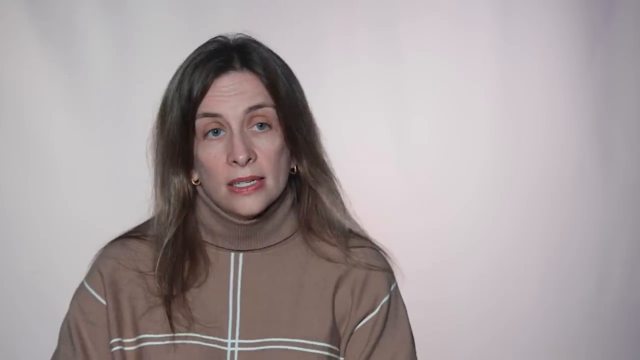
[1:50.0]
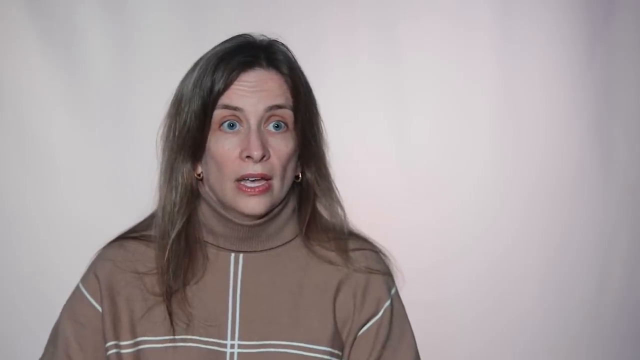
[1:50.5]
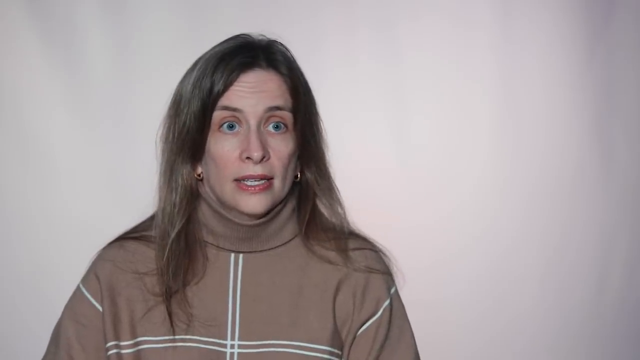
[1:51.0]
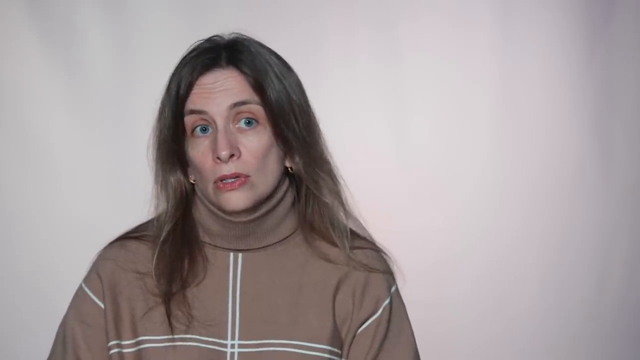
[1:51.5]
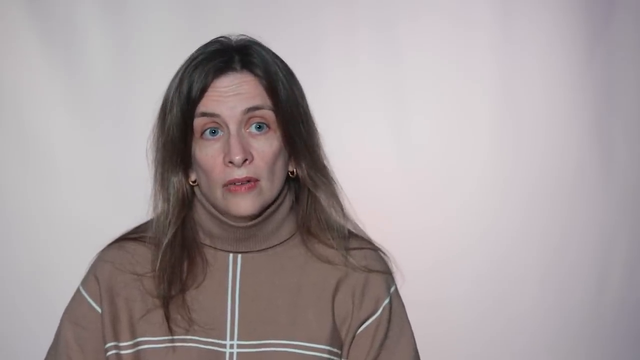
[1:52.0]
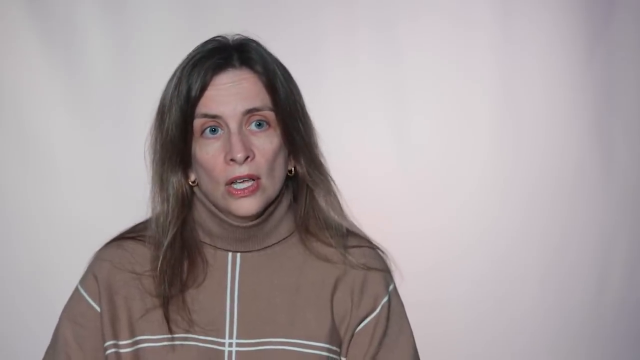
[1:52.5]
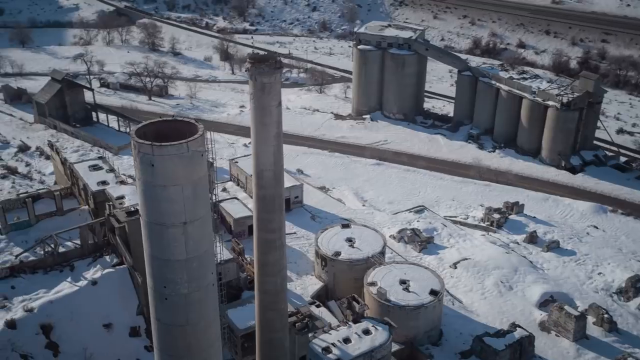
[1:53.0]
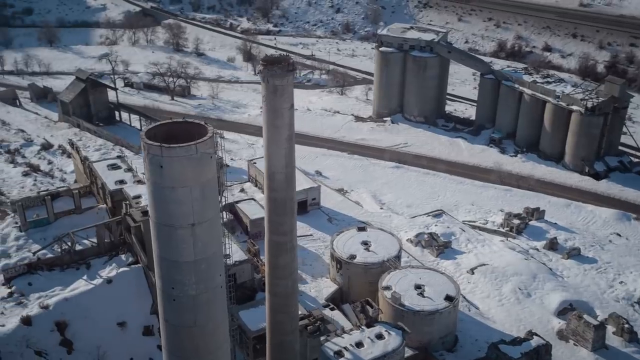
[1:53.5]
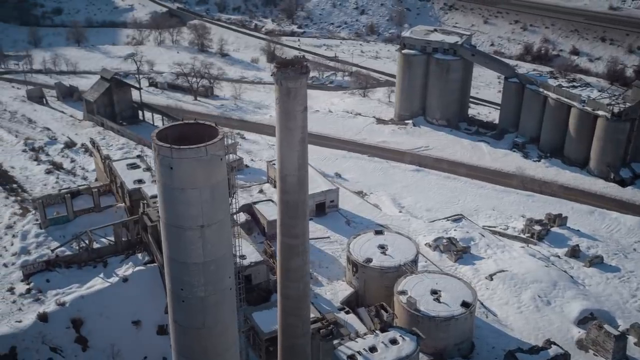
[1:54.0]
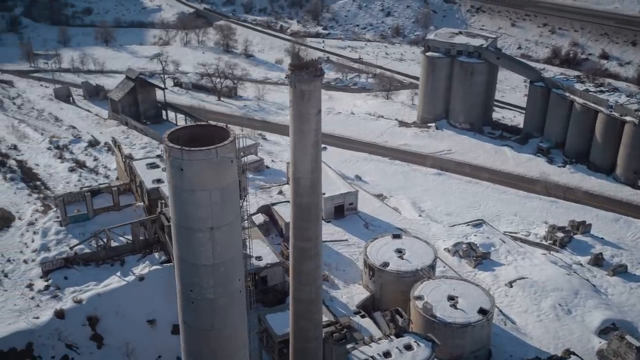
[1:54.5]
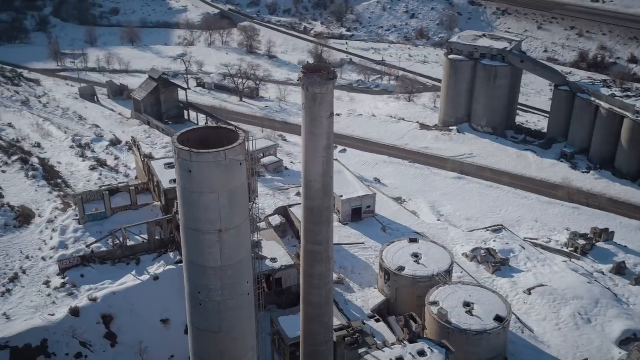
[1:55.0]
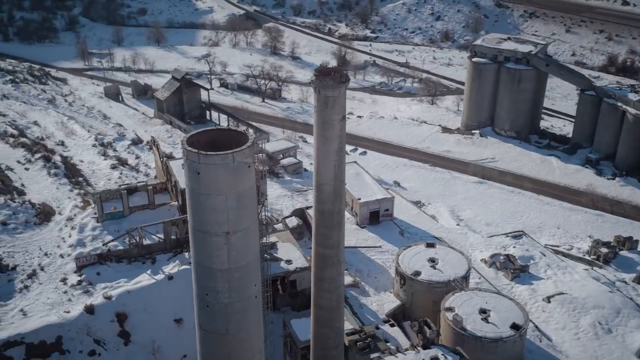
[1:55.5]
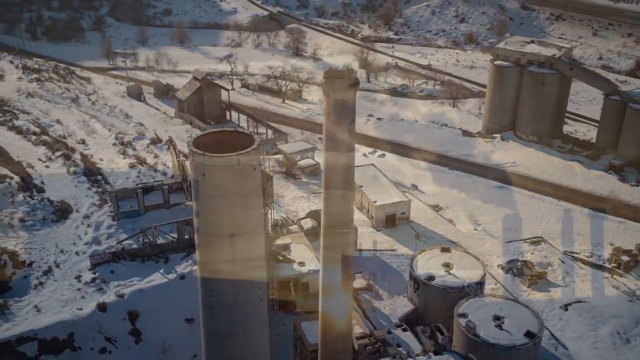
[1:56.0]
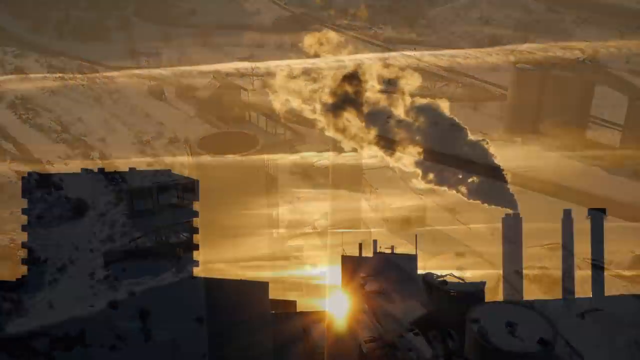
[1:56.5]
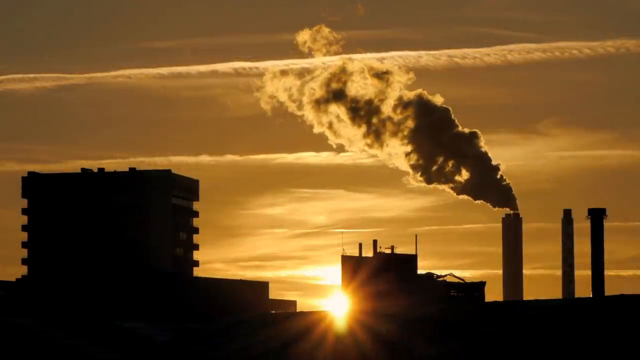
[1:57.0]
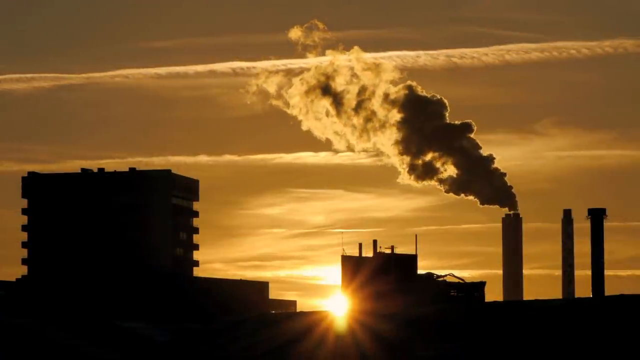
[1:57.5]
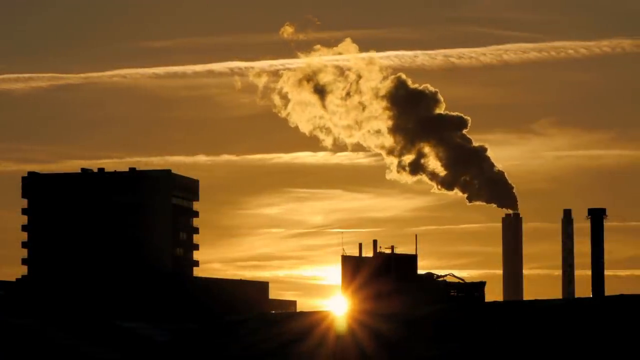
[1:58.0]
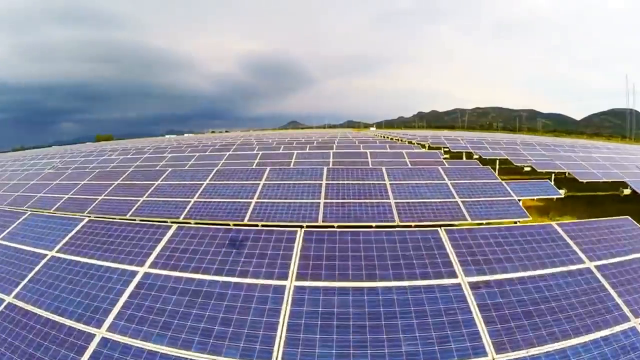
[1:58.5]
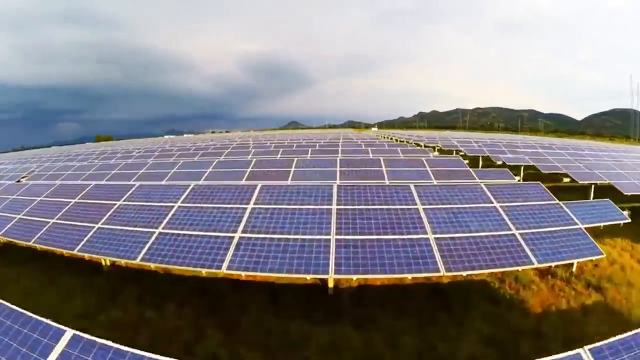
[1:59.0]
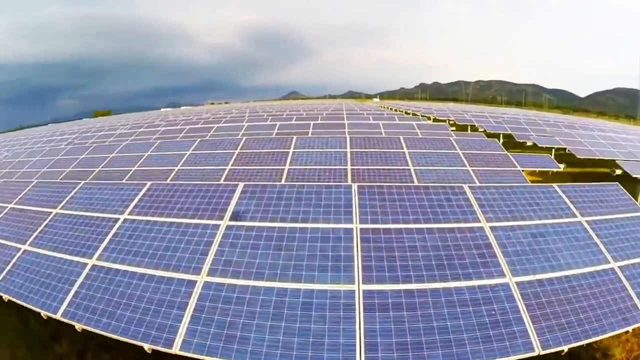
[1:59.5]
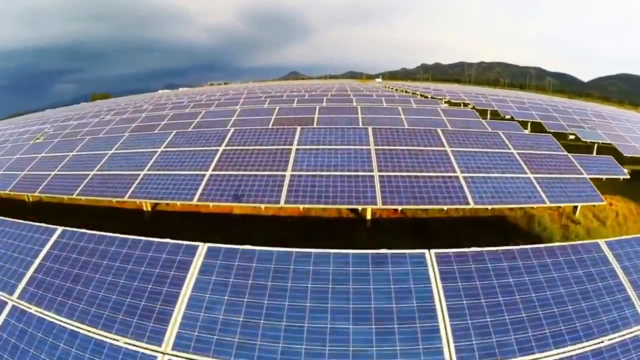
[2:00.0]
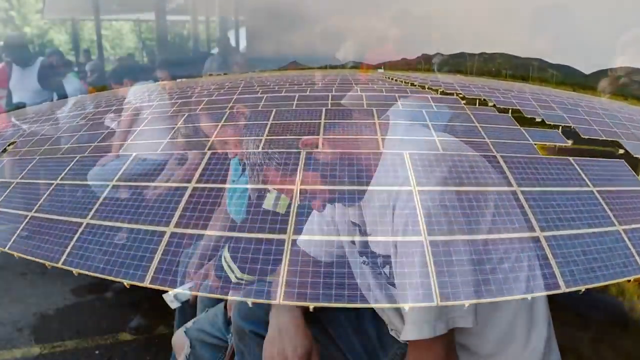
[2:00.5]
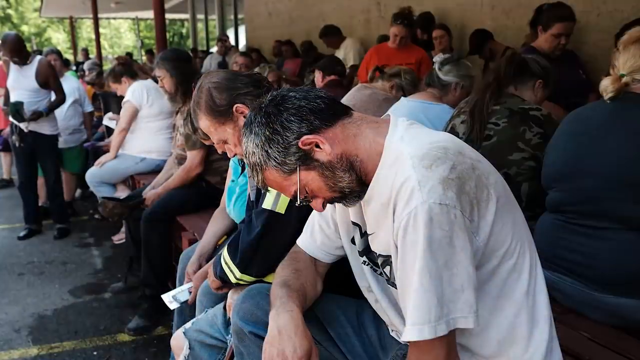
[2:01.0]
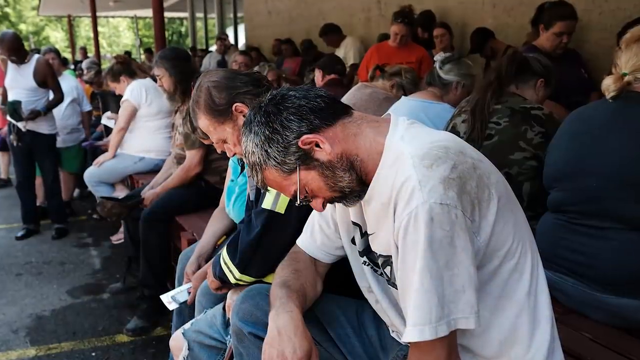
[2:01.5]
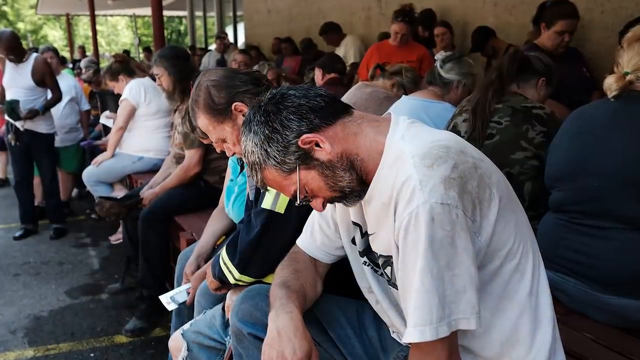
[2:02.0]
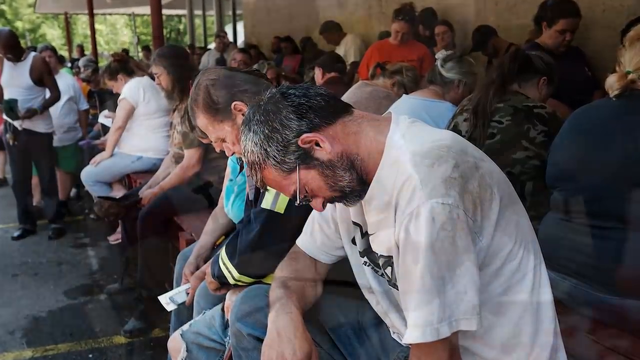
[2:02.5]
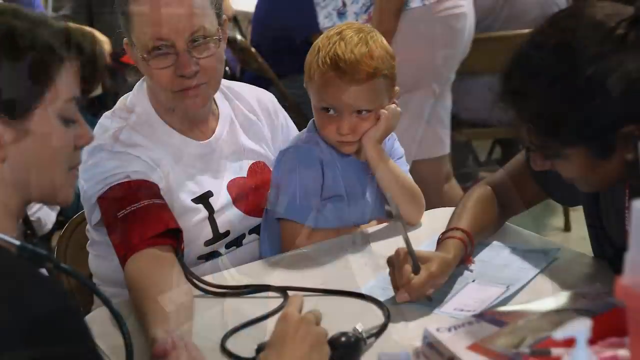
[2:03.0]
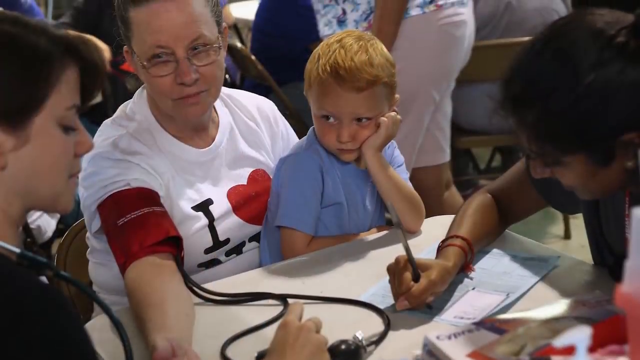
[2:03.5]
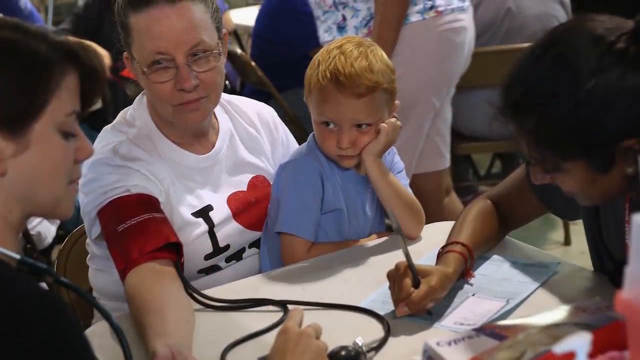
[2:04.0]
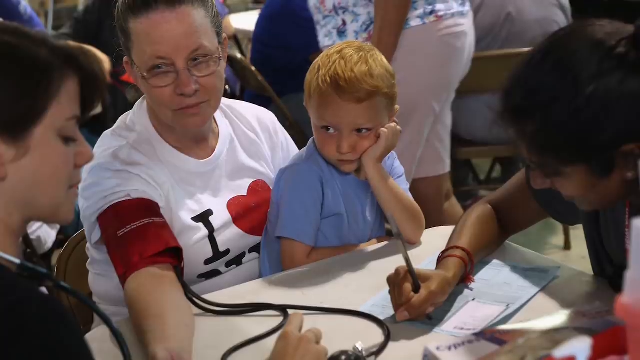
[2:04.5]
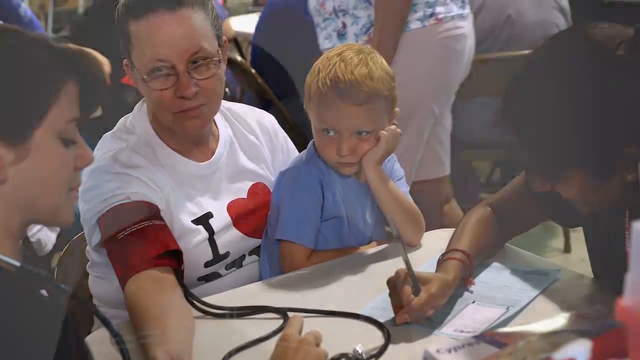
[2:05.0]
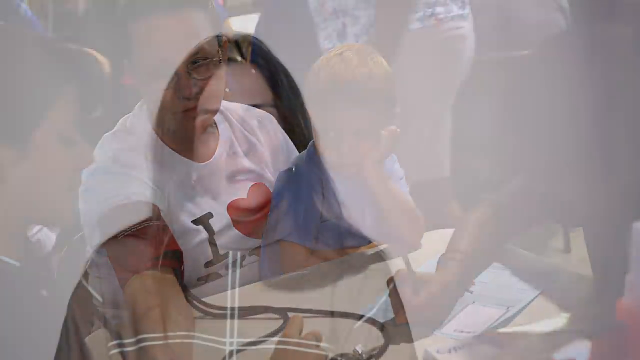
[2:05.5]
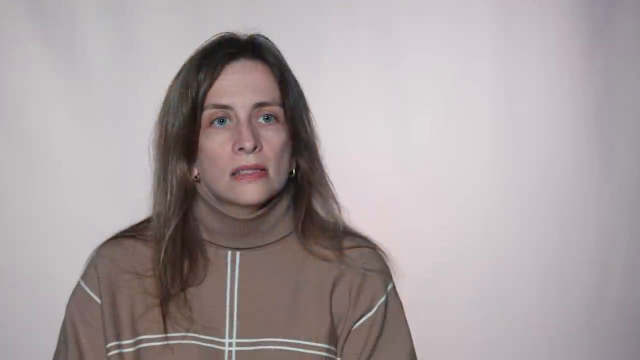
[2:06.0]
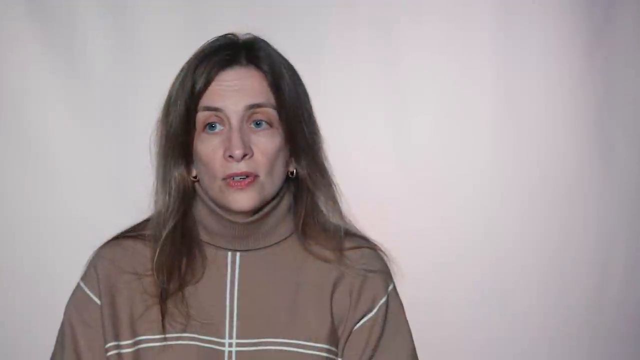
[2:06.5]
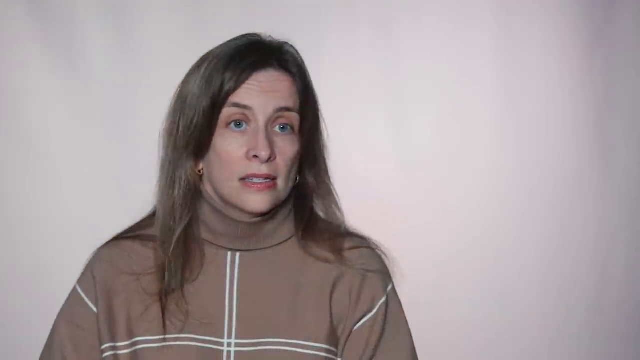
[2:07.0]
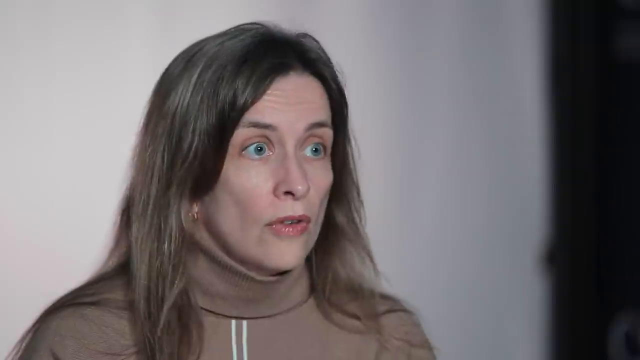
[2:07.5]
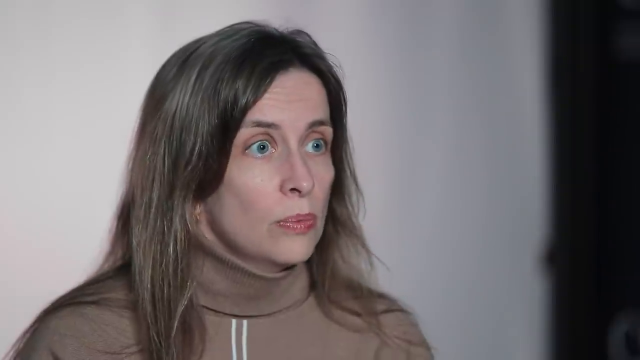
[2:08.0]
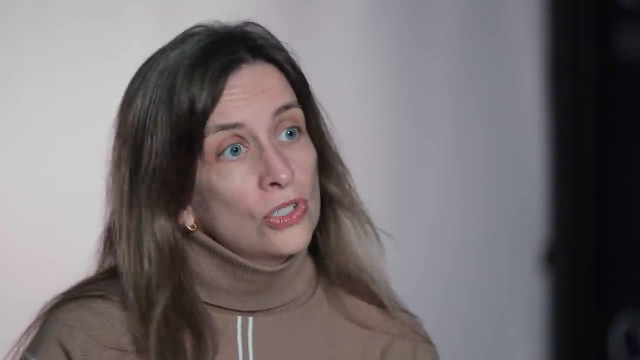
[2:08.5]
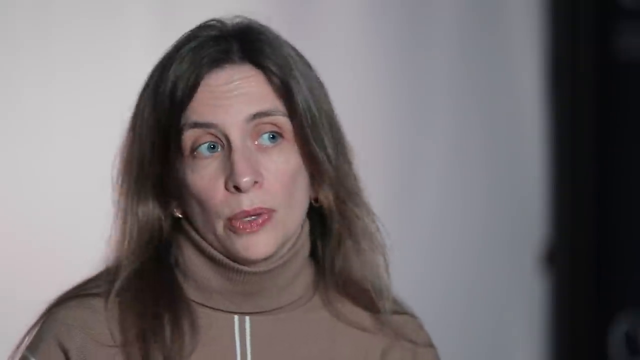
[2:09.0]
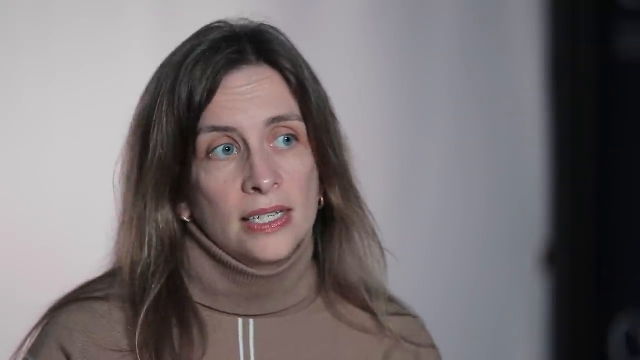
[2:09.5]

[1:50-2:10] A white woman speaks to an interviewer who is slightly off to the left. She has a white background behind her, brown hair, a white complexion and red lipstick, and wears a brown turtleneck-like top with two white lines going down the center and two white lines going across the chest. The next image shows a snow-covered area with gray columns and a tubed area. Then an evening sky appears with about three smokestacks on the right, one of them billowing gray smoke. The sun dips behind the black outline of a building on the right, and there is a black outline of a building on the left. A shot of blue-white paneled solar panels shows a gray sky in the background, gray mountains on the right and a little brown soil underneath. Next, a number of people sit on benches in front of a brown wall, some of them falling asleep. More people appear, apparently getting their blood pressure taken. A woman has a red strap around her arm and wears a white t-shirt with "I" in black font and a heart. A little boy with blonde hair in a blue t-shirt has his hand on his left cheek and looks at the woman taking the blood pressure. There are about four people in this shot. The video returns to the woman with brown hair, red lipstick and a white complexion, in the brown turtleneck top with white lines going down the front and center, against the white background.